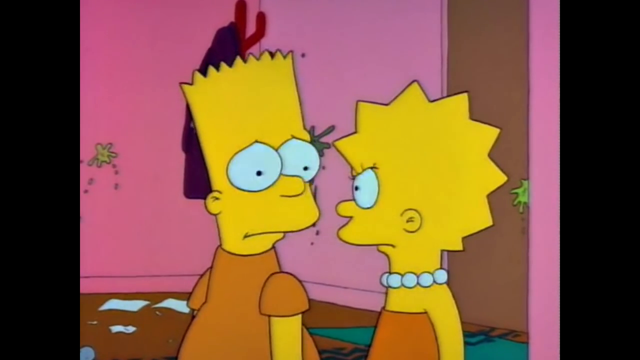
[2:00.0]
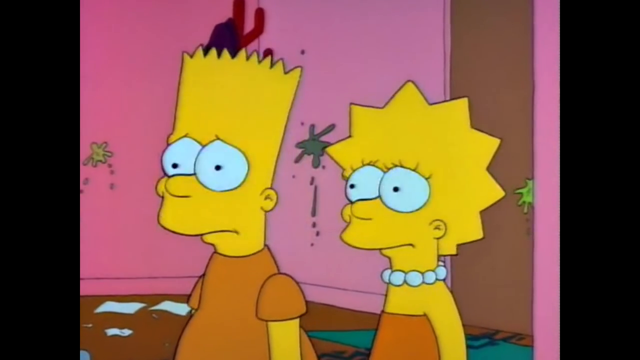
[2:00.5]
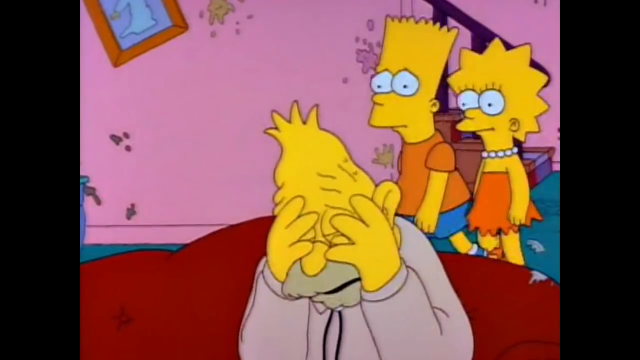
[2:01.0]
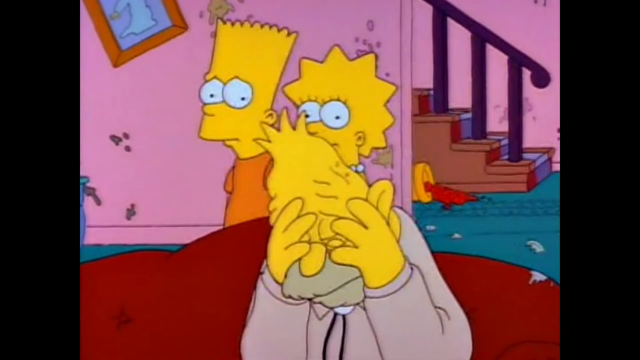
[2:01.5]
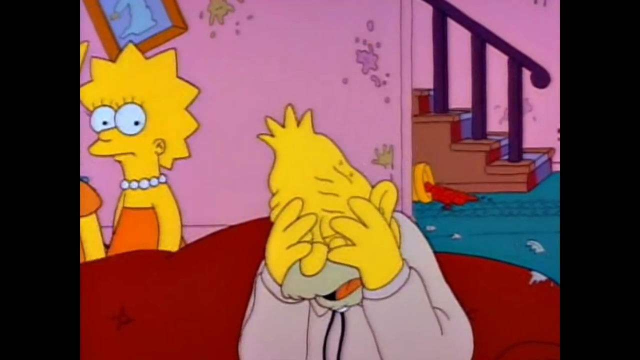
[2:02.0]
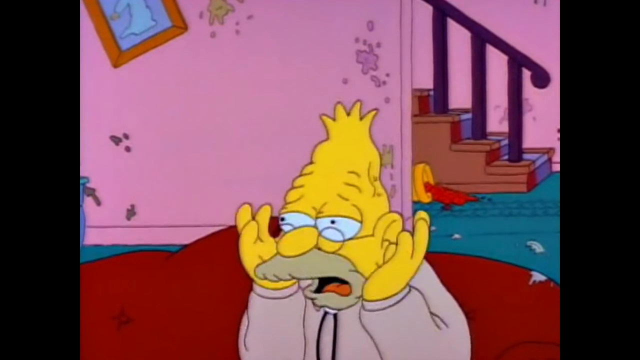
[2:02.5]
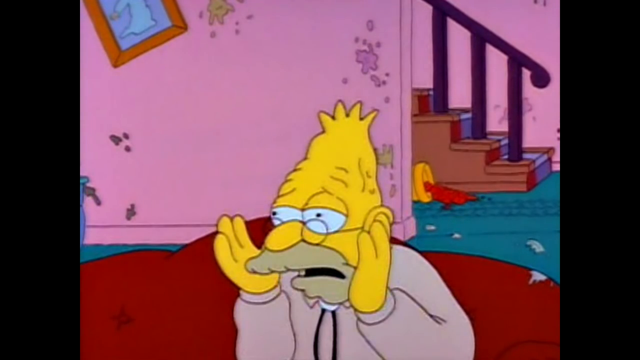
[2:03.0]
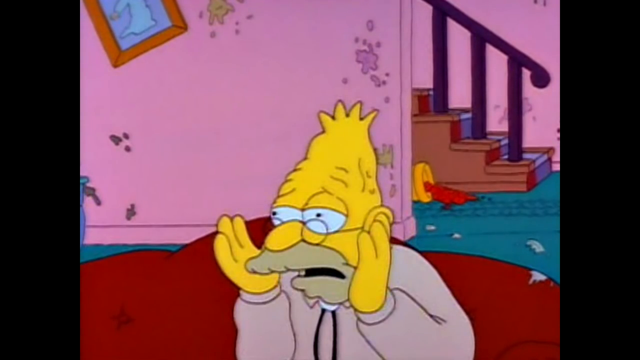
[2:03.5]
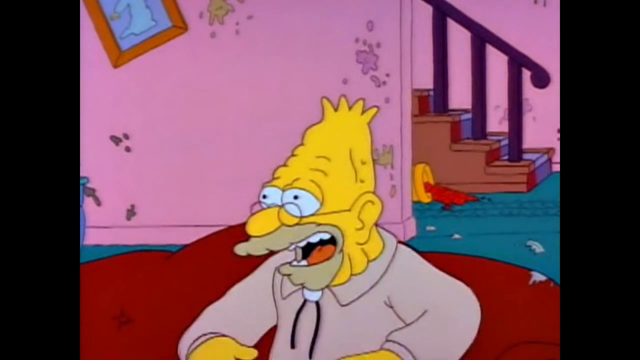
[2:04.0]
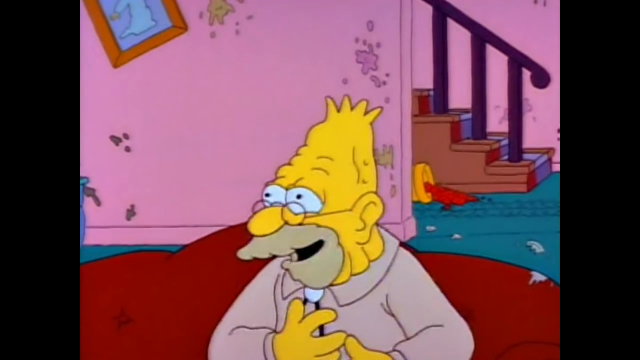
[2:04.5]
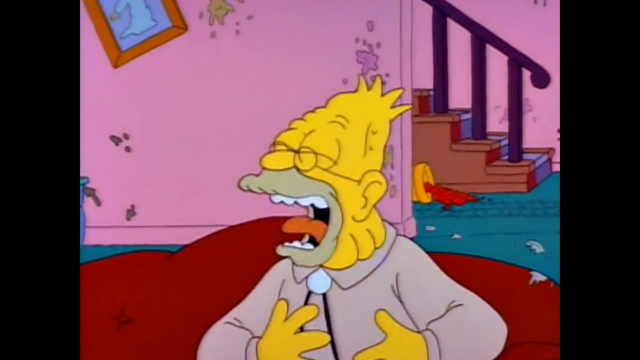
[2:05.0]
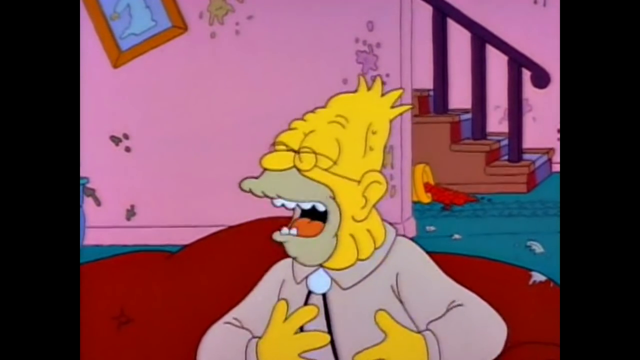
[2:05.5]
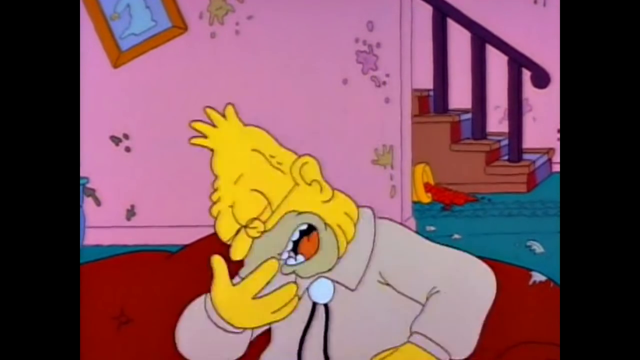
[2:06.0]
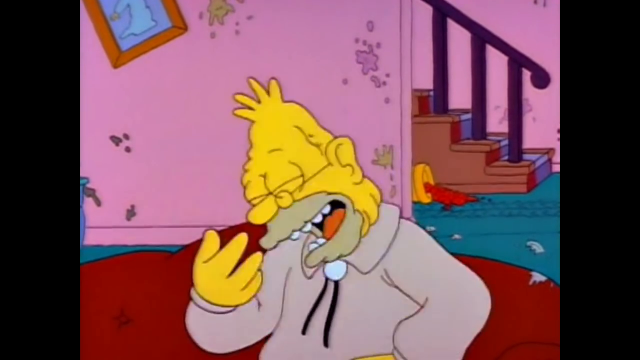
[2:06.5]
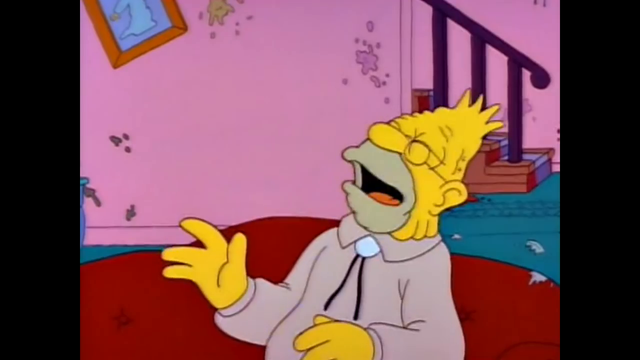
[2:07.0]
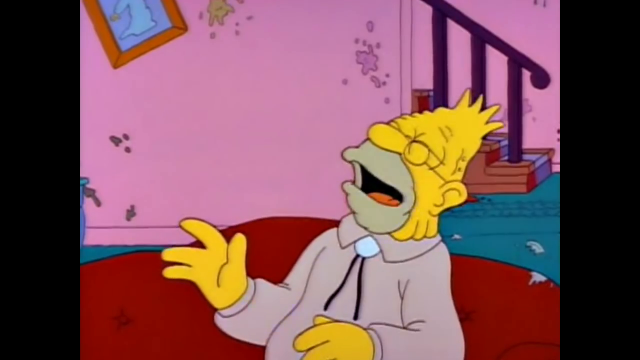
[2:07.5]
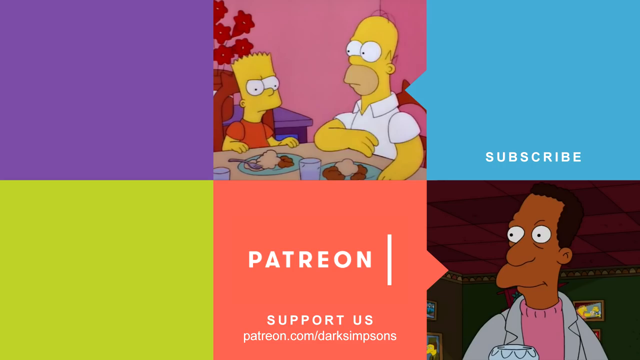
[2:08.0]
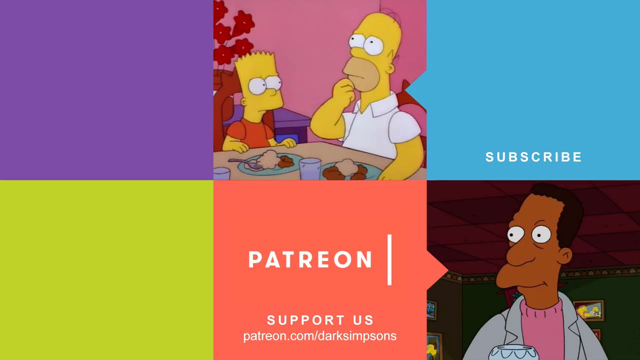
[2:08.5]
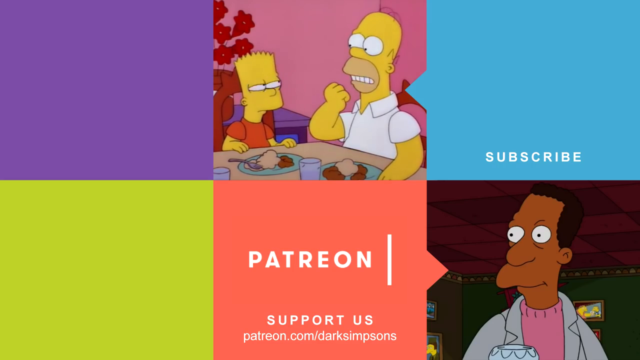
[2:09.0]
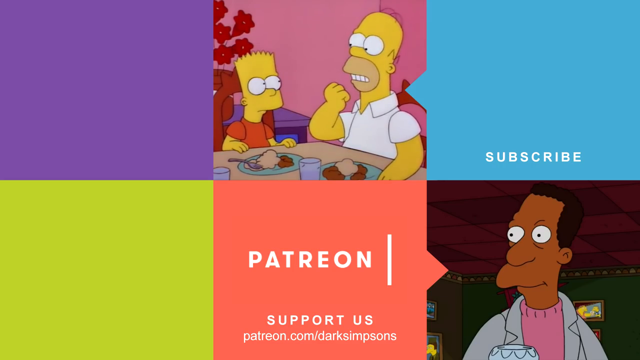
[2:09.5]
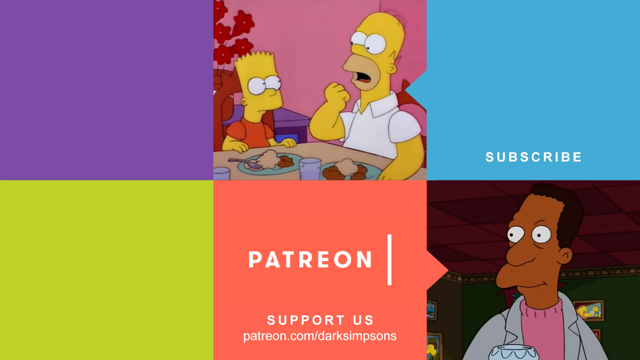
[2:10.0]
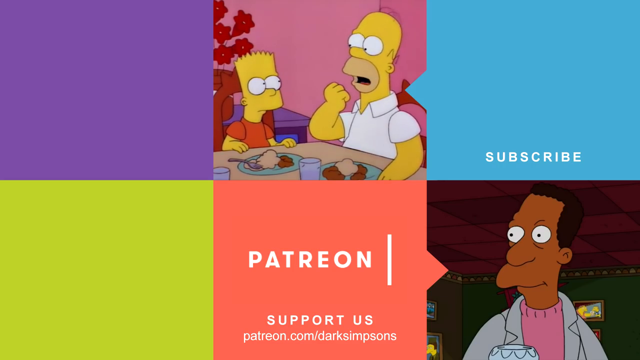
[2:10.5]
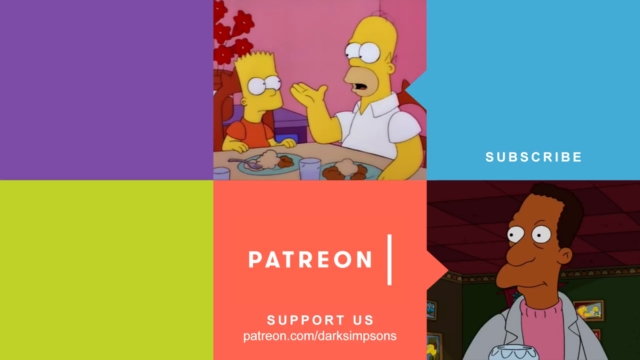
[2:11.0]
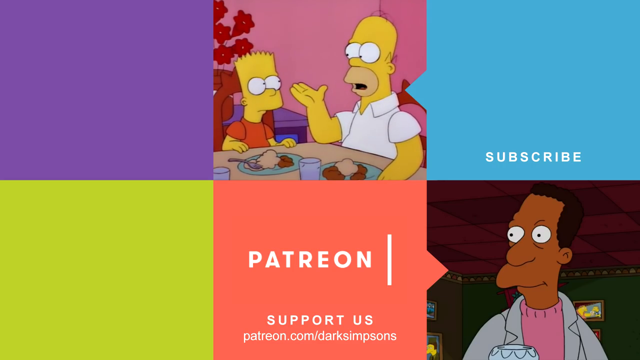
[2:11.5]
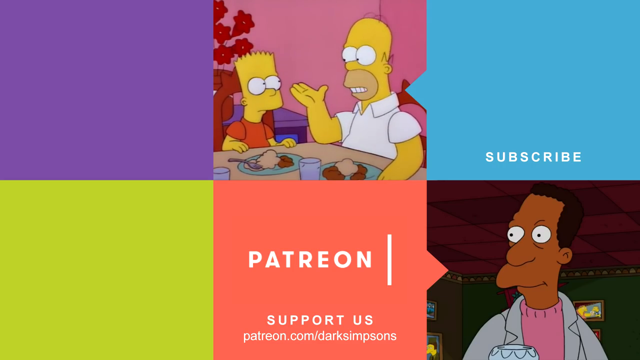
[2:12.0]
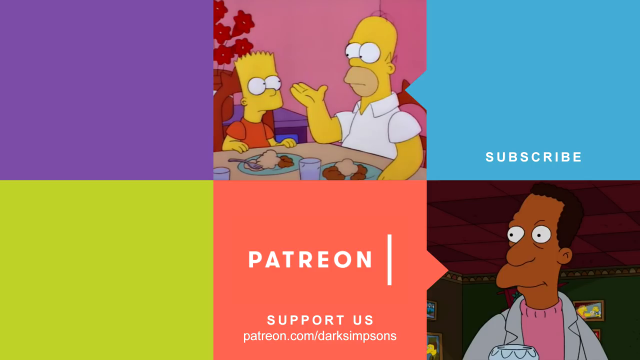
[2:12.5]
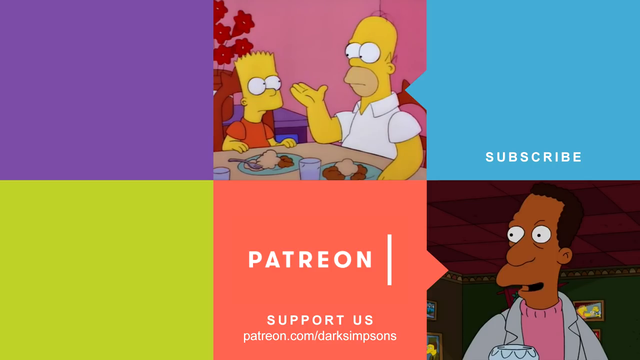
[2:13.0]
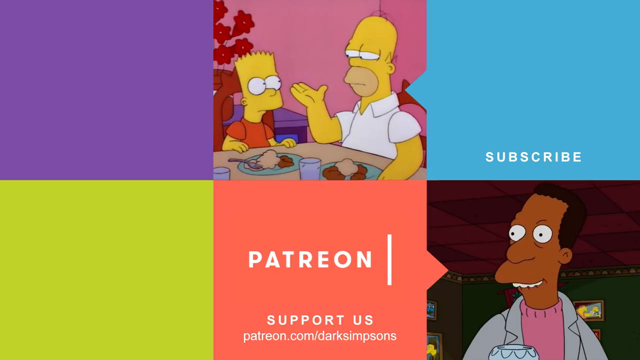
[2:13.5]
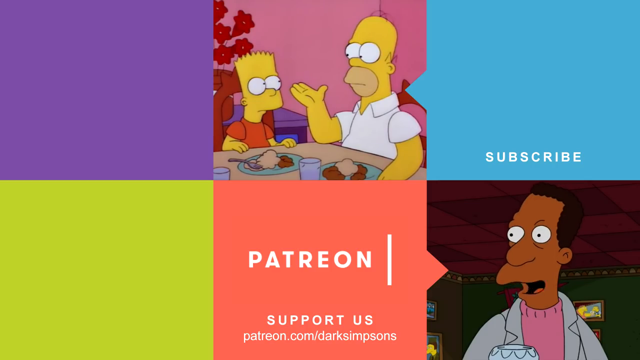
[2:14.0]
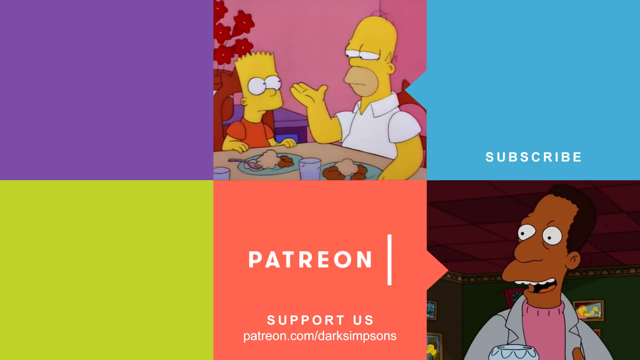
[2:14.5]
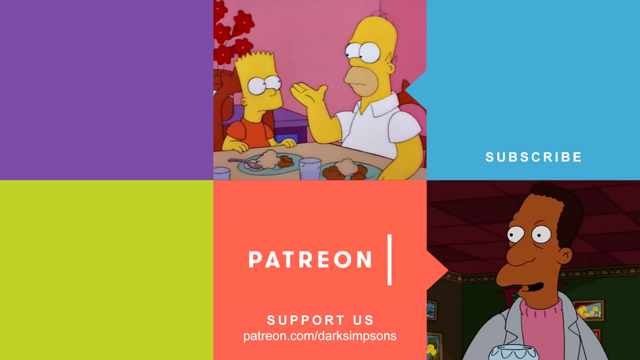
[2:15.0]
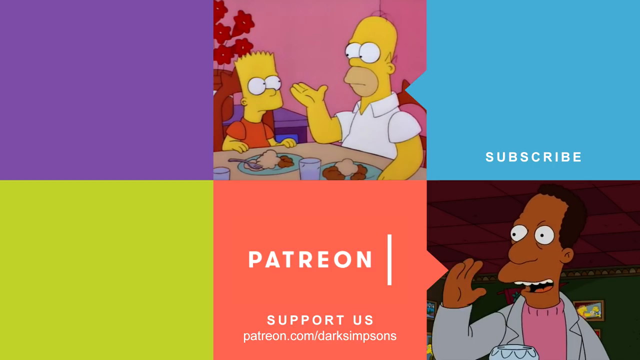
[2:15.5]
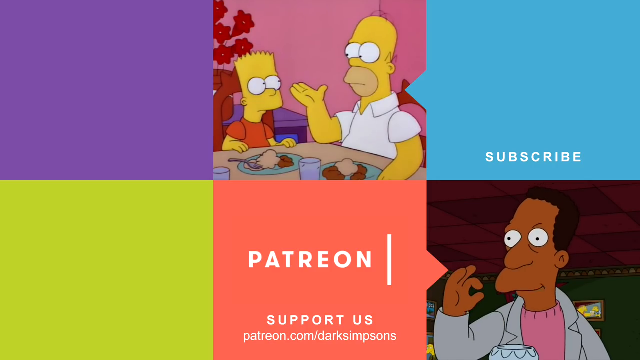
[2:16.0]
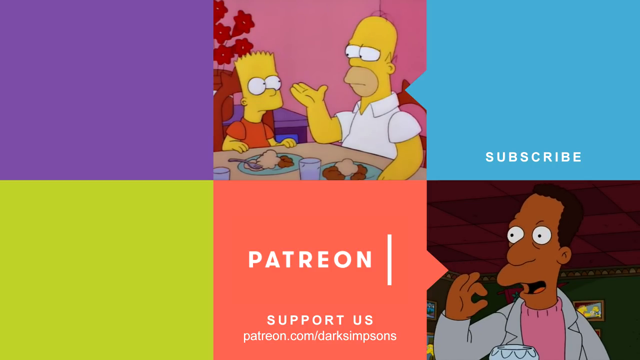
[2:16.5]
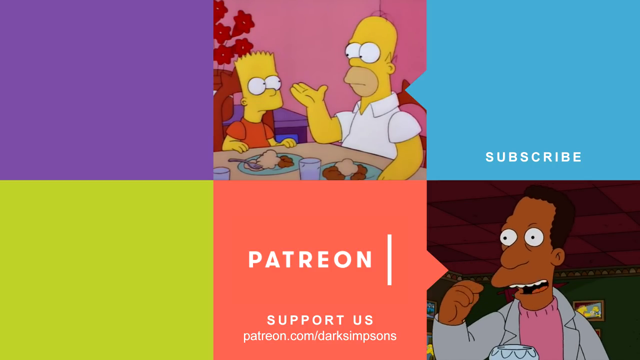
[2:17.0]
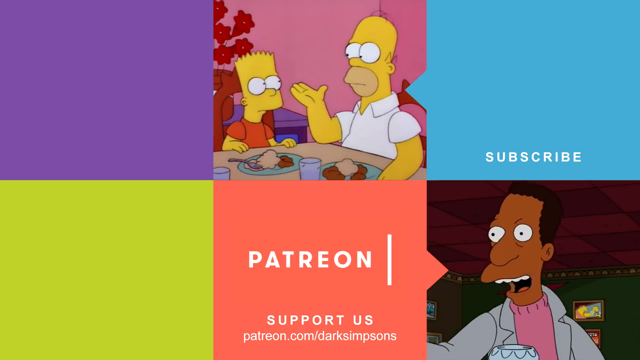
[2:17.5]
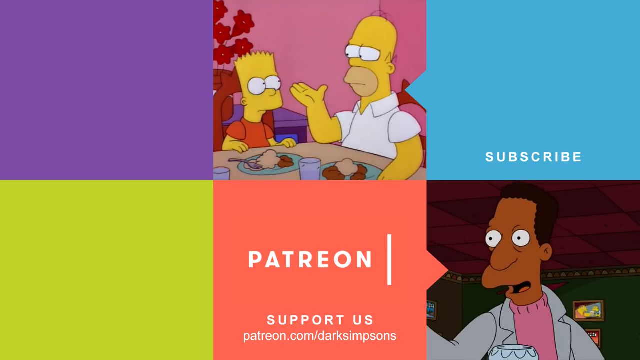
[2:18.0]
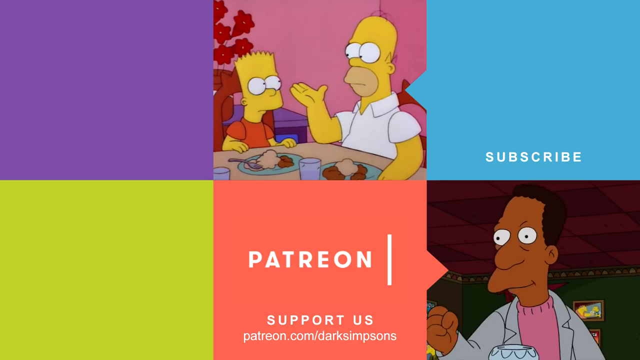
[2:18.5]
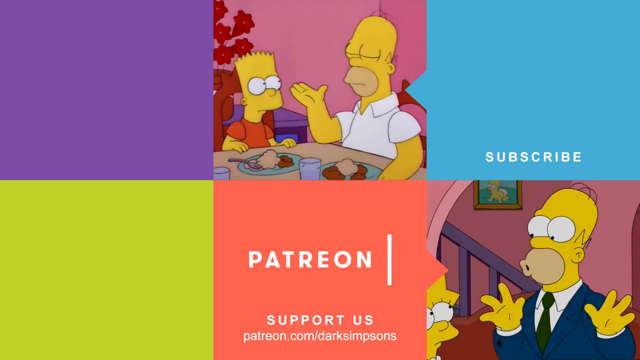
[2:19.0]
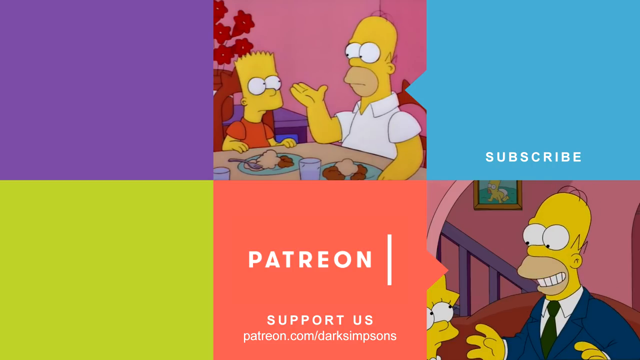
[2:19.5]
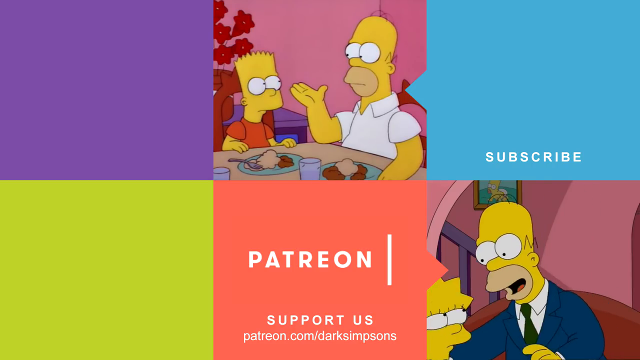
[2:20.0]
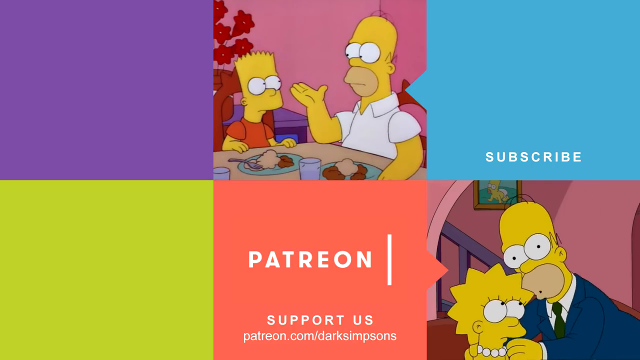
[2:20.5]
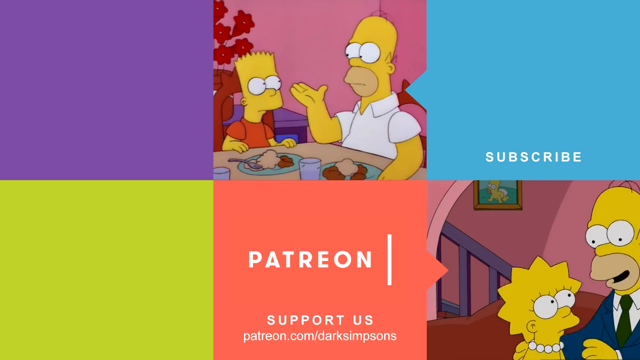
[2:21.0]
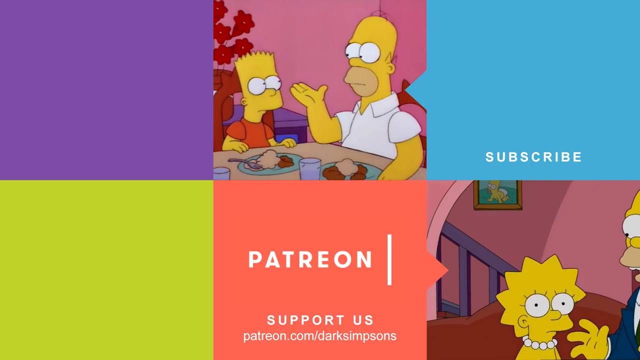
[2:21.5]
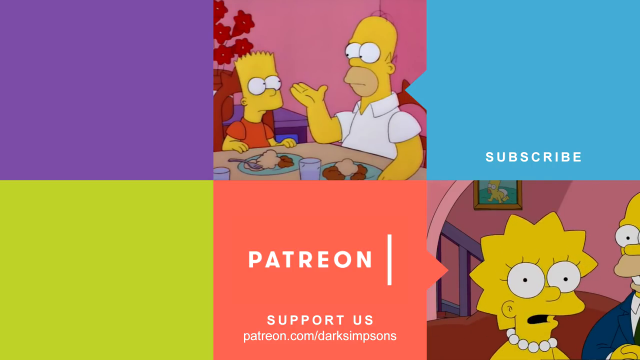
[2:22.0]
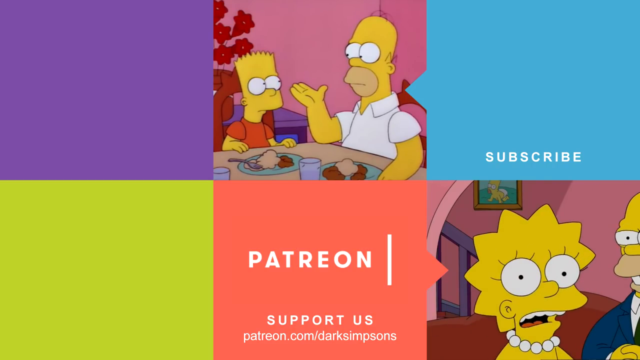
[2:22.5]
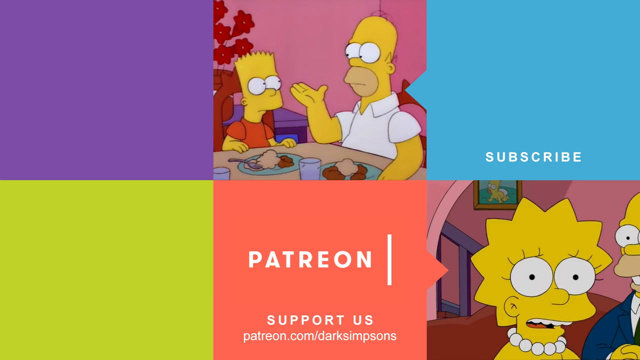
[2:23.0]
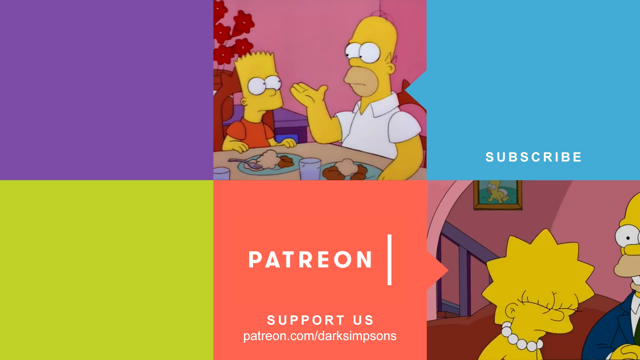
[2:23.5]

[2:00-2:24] Bart and Maggie Simpson stand looking at each other, very worried or angry. There are splattered stains on the bubblegum-pink walls and torn-up pieces of paper on the floor behind them. Maggie wears a large pearl necklace, and both wear basically orangish-brown clothes. They look in at their grandfather, who is crying and pretends to laugh, faking it so nobody knows he is upset. The scene then changes to text reading "patron, subscribe, support us, patron.com, Dark Simpsons".